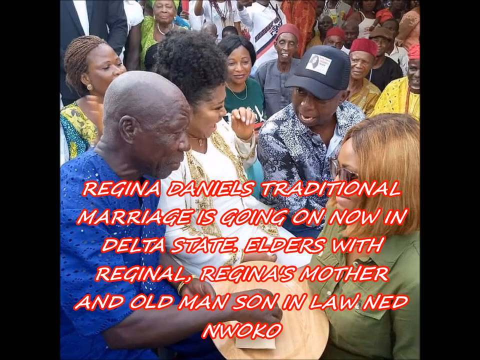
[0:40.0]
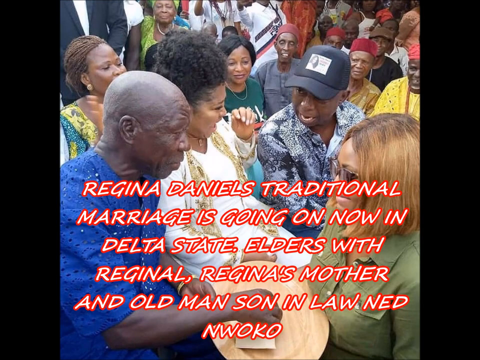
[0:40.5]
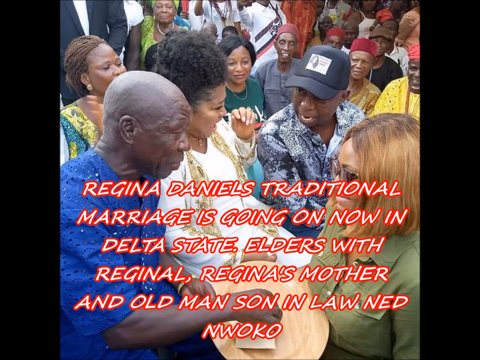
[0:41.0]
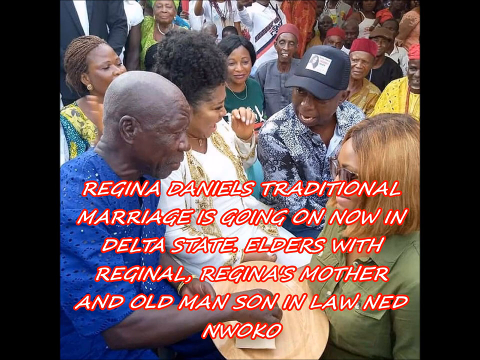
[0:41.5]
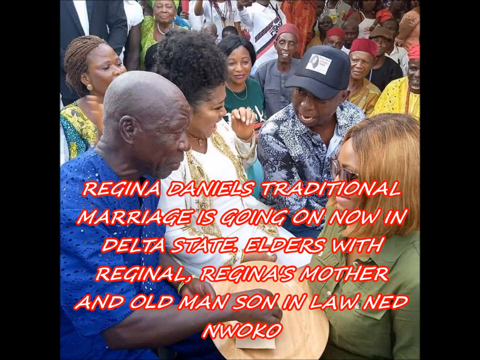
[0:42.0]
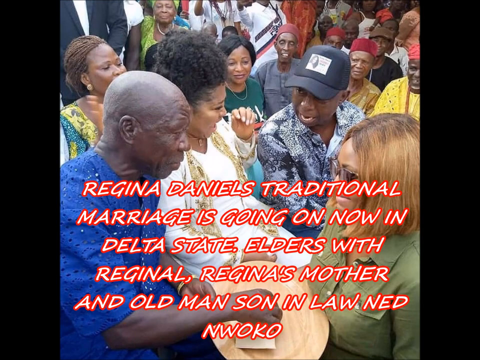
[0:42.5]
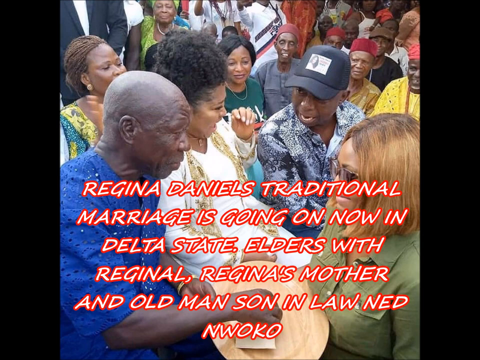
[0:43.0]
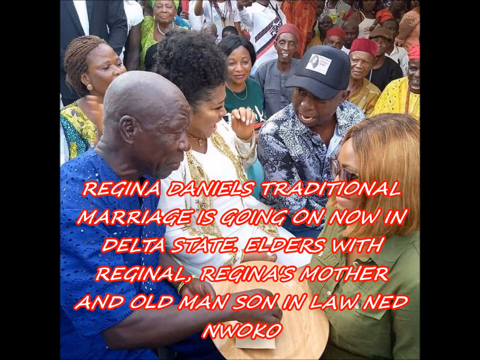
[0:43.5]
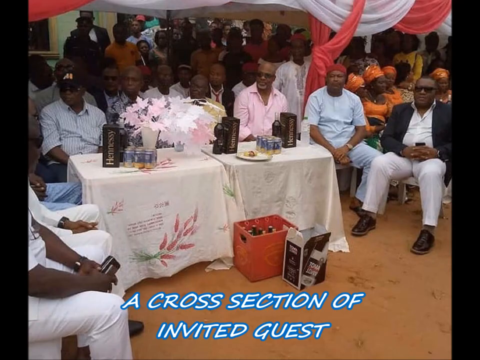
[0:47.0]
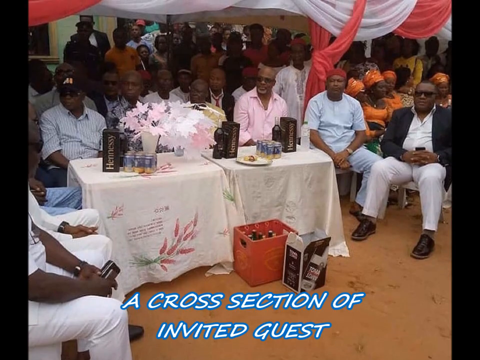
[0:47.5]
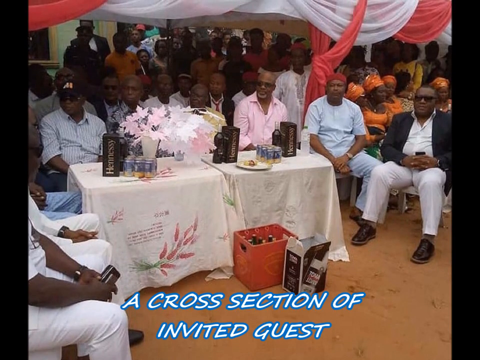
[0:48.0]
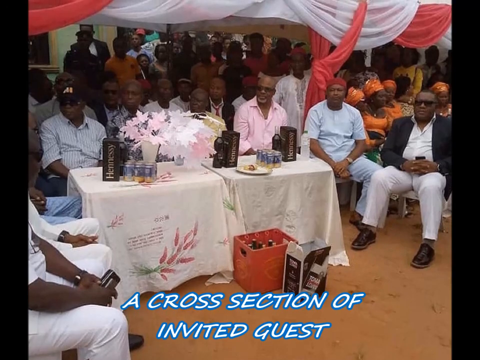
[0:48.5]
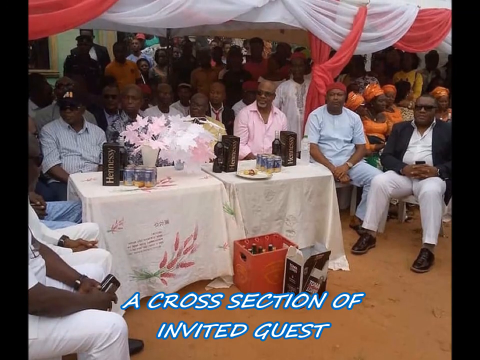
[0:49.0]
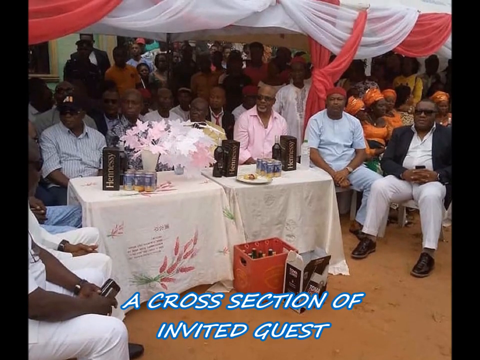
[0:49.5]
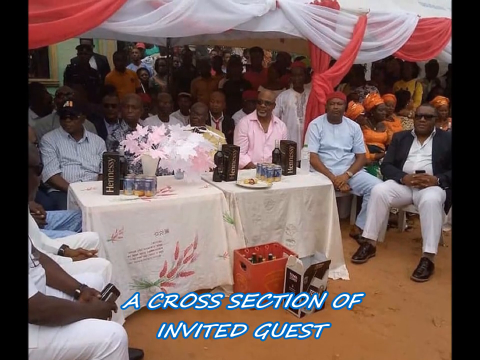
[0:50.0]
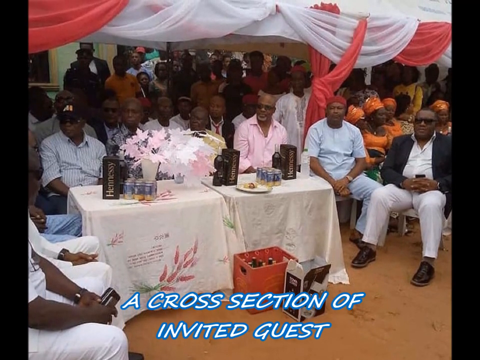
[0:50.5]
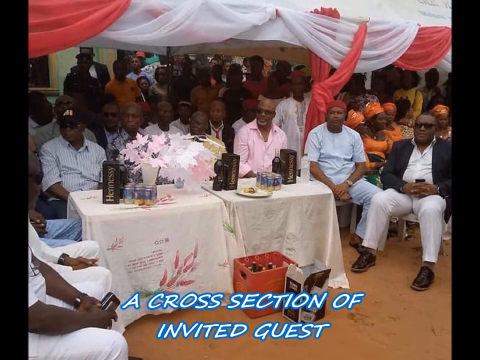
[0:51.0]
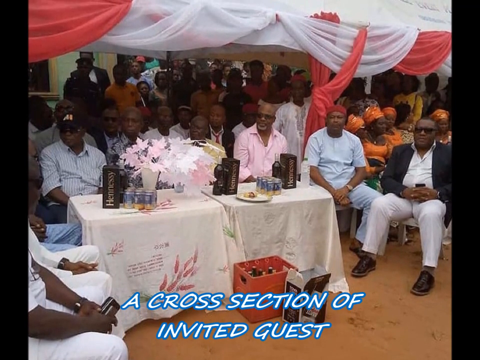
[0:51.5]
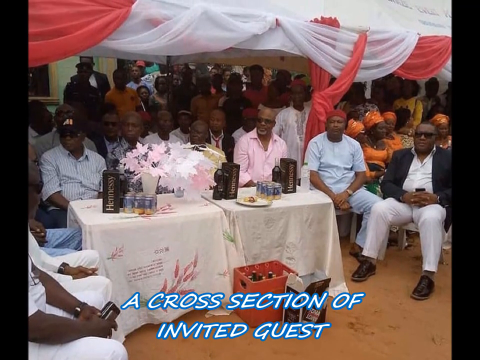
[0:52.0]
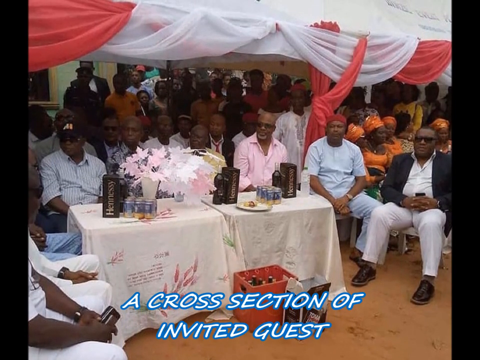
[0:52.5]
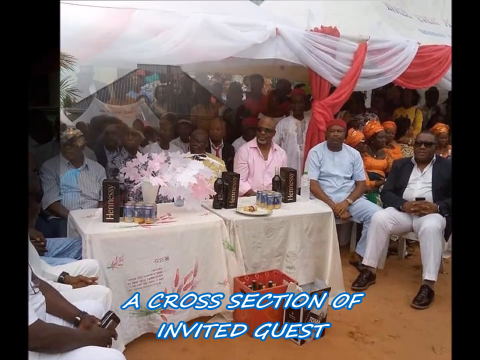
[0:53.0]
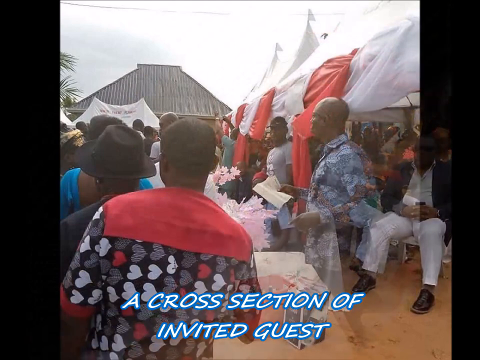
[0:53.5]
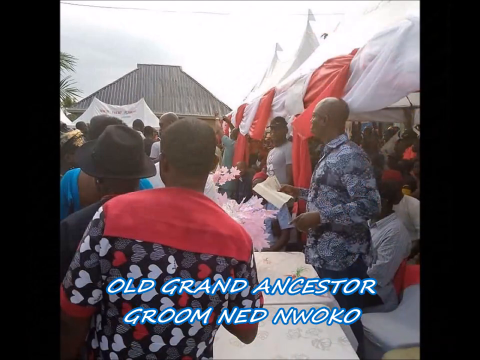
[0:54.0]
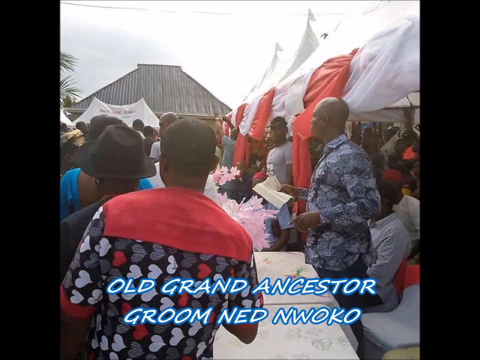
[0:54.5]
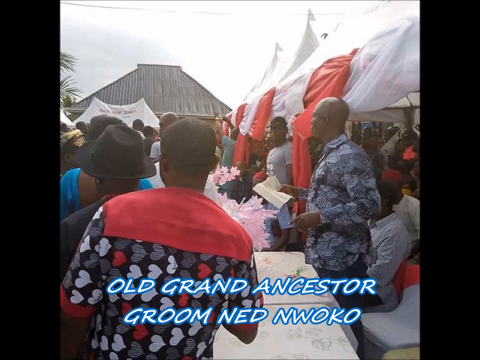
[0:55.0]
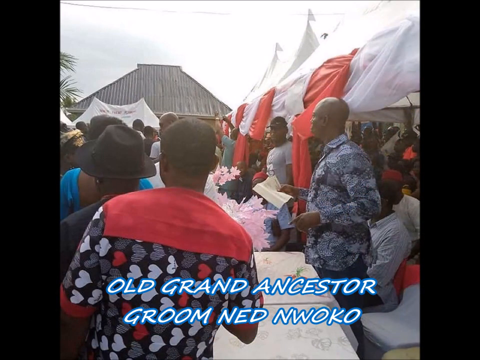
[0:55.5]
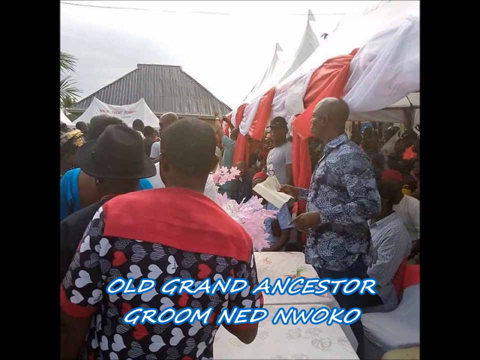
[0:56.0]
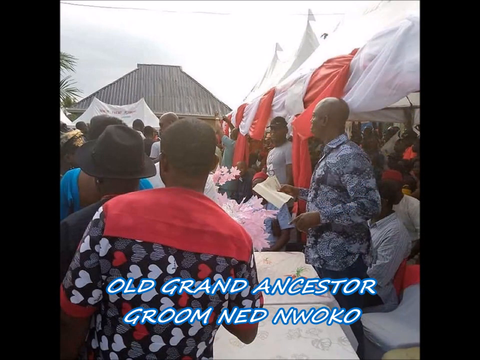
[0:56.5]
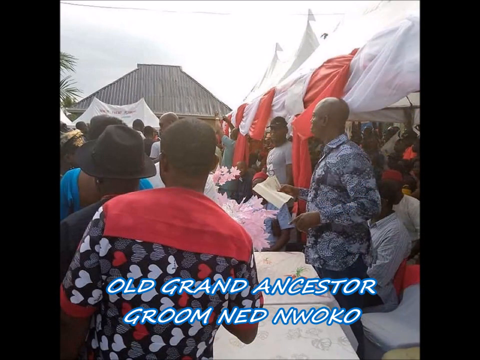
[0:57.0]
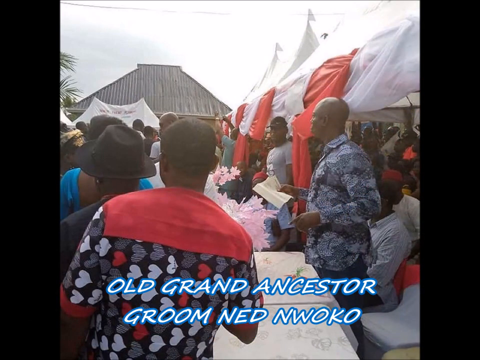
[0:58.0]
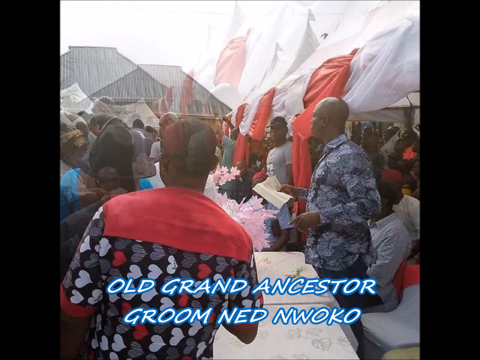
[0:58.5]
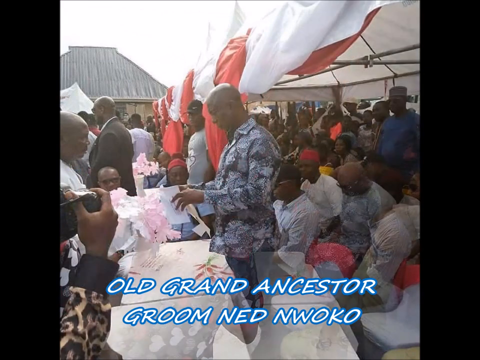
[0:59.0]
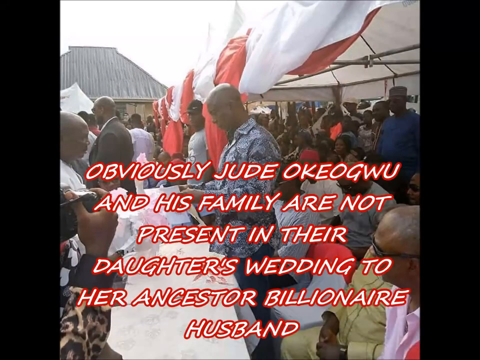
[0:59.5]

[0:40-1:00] Pictures of many people appear. At the top right is Regina Daniels' traditional marriage going on in Delta State, with elders, Regina Daniels' mother, and the son-in-law Nnedu Nwoku. Nnedu Nwoku is in the picture wearing a face cap, along with a man in blue lace, a lady, and another lady wearing glasses. It looks like a traditional marriage ceremony. A cross section of invited guests is visible: a man in a black suit with glasses, a man in a light native dress with a red native cap, and beside him a man with glasses and a pink top. Tables are set out with drinks for the occasion, and there are canopies in pink and white. At the top right, Nnedu Nwoku is carrying out his traditional wedding.